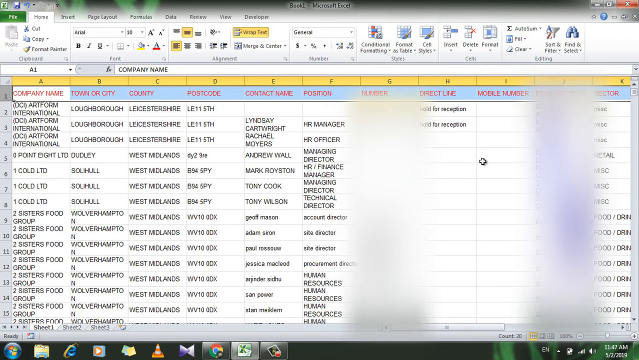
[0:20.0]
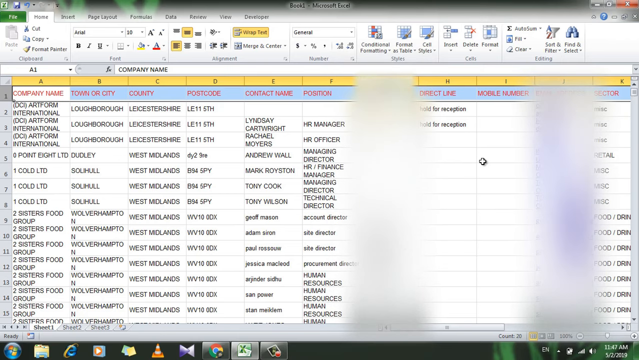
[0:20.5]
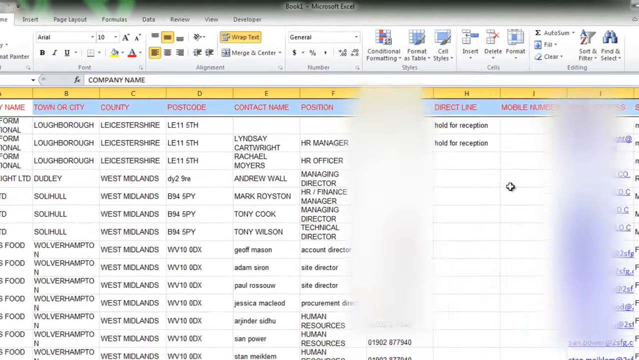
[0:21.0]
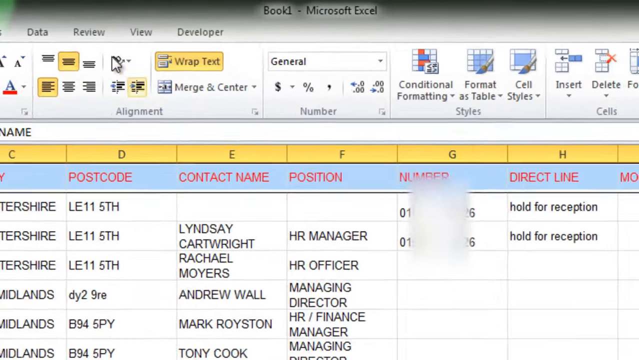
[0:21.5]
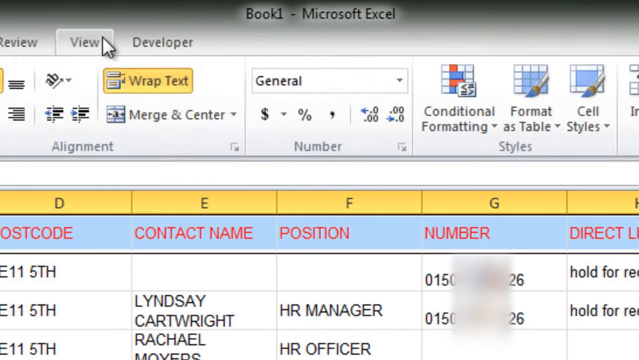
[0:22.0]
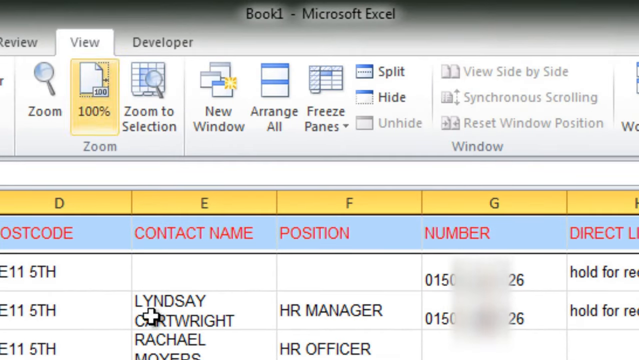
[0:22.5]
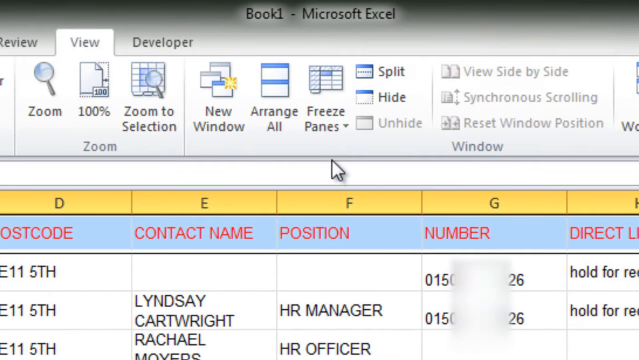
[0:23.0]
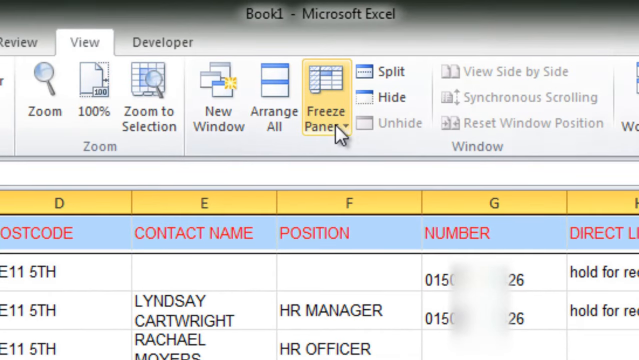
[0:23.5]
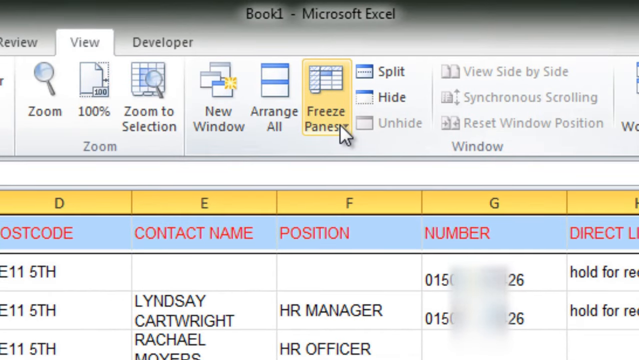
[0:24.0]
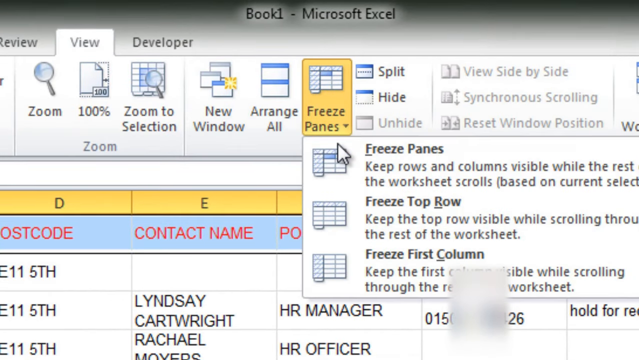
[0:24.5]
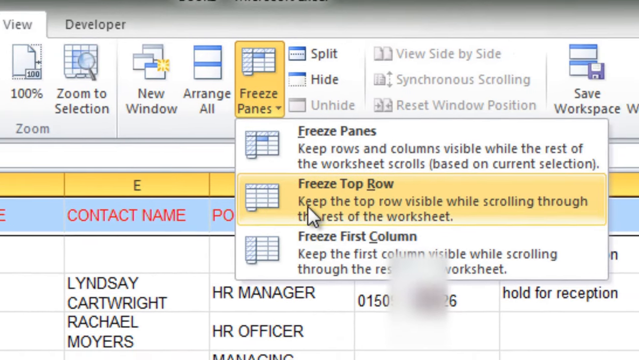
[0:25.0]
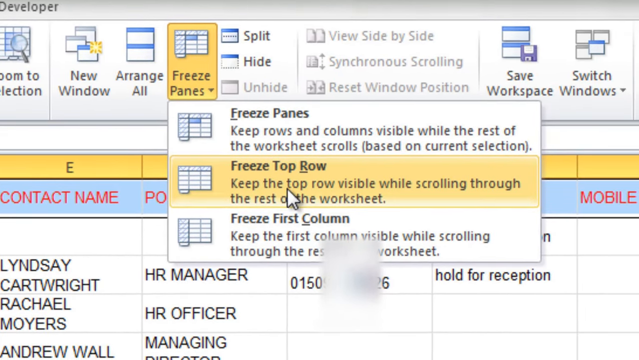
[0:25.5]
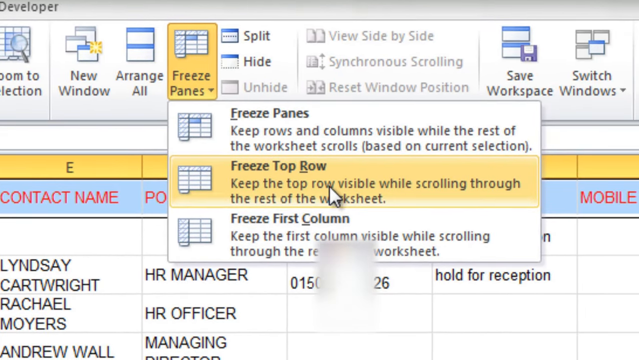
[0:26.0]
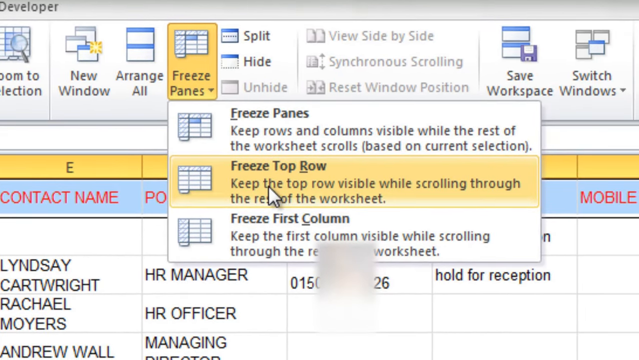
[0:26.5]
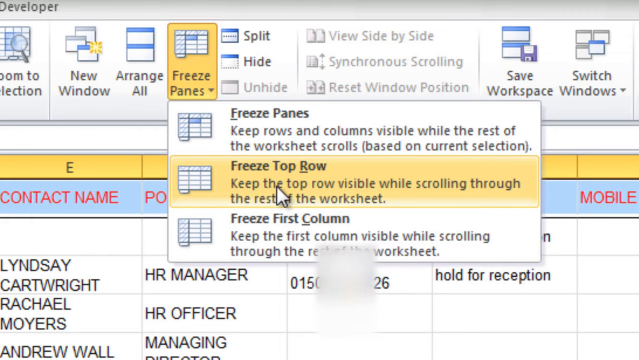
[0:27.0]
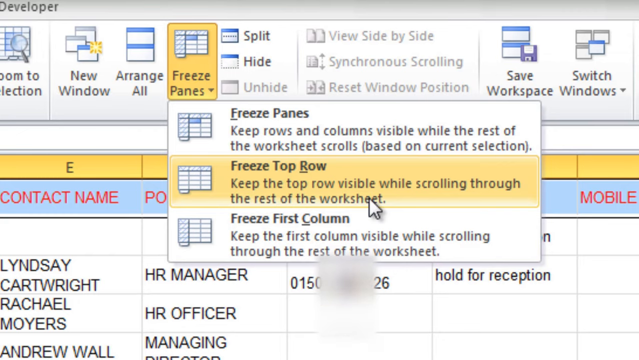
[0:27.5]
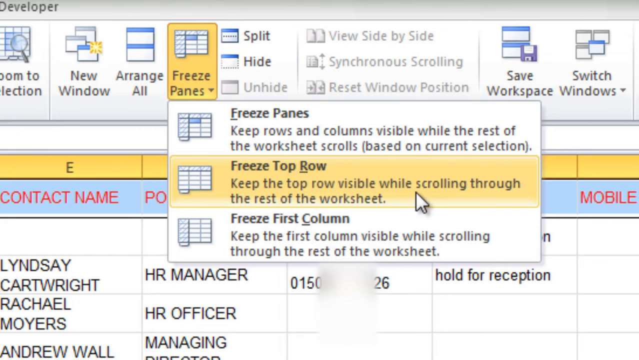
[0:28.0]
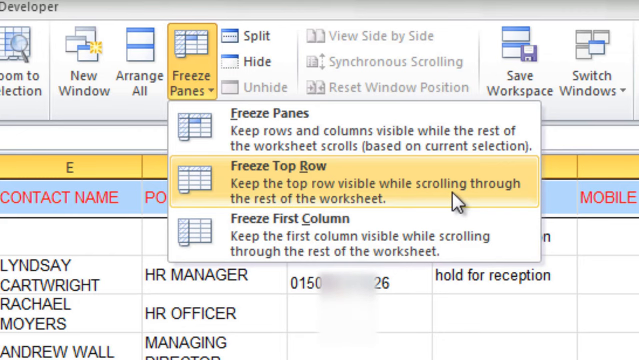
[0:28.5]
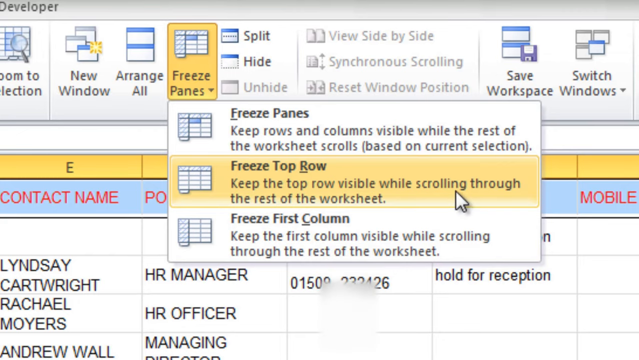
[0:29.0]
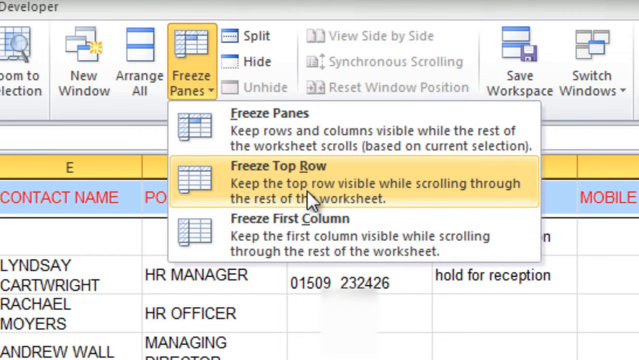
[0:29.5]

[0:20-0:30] A person uses Microsoft Excel, going to View to make a row stand out as the sheet scrolls. The spreadsheet tracks the companies the person transacts with and the people in those companies, with their location and contact number.